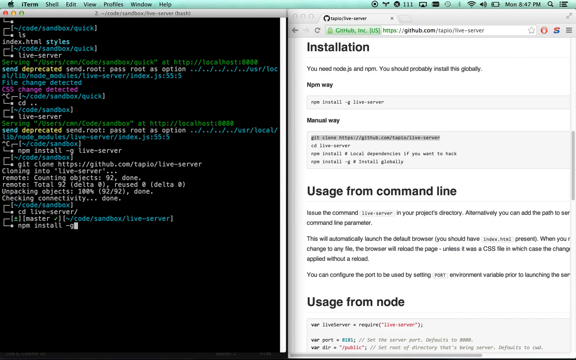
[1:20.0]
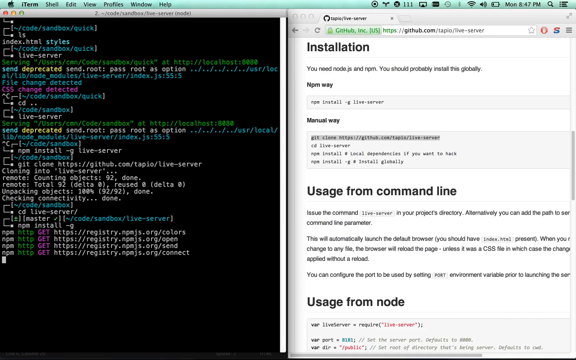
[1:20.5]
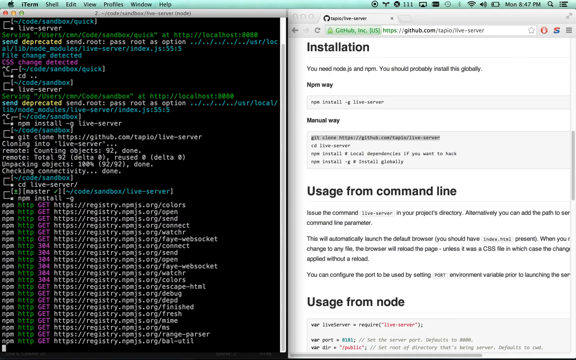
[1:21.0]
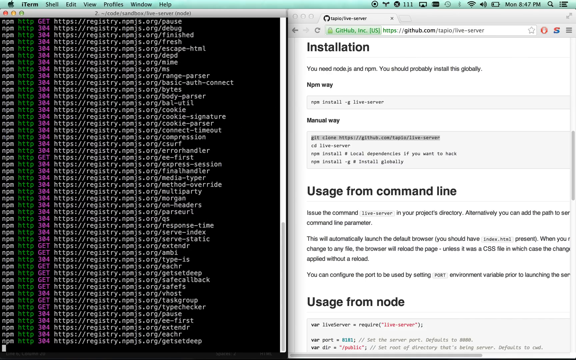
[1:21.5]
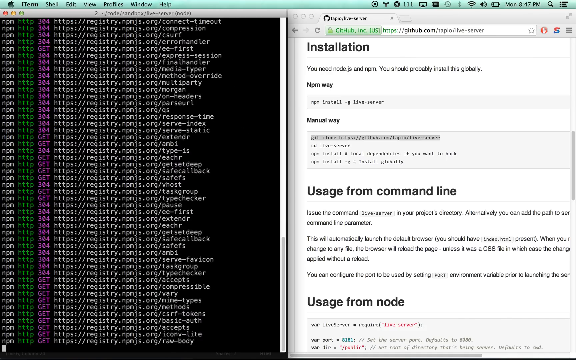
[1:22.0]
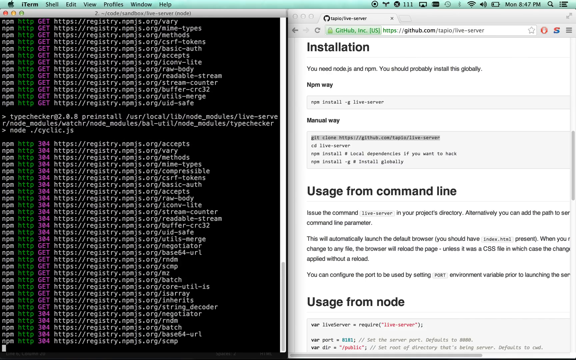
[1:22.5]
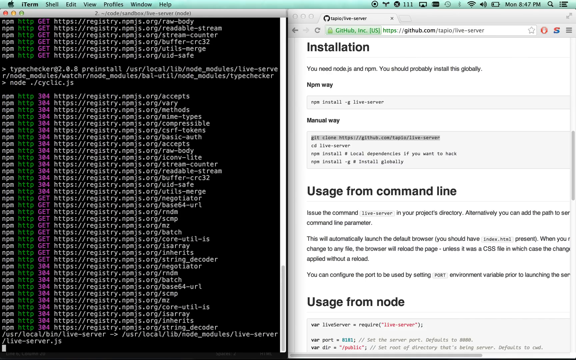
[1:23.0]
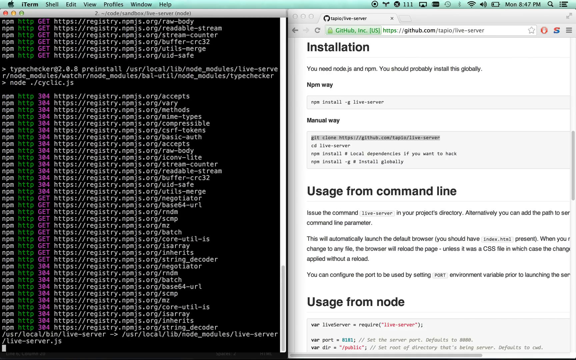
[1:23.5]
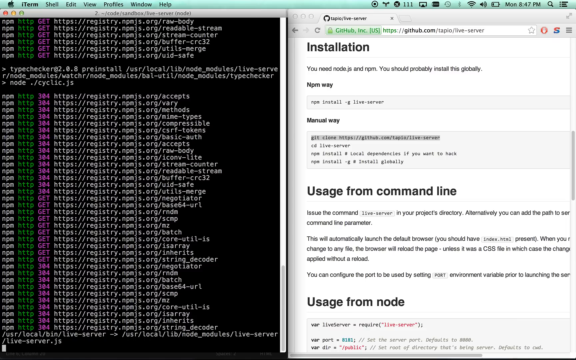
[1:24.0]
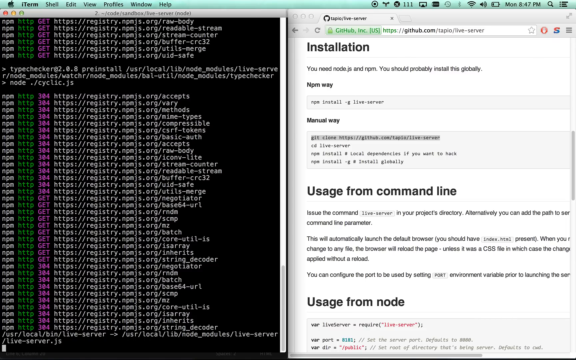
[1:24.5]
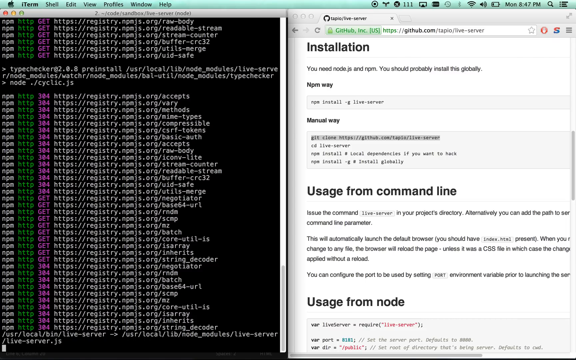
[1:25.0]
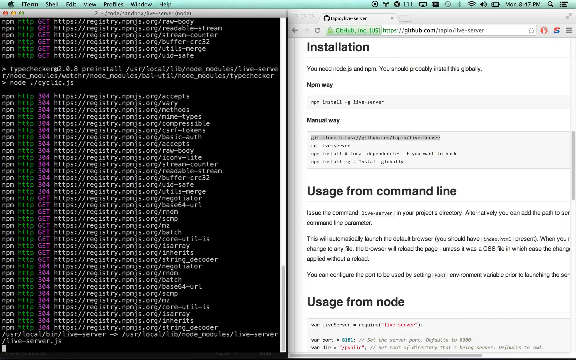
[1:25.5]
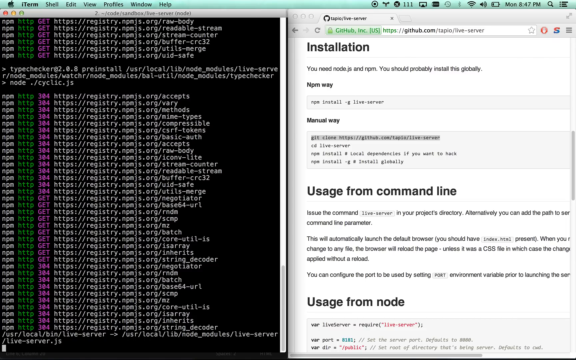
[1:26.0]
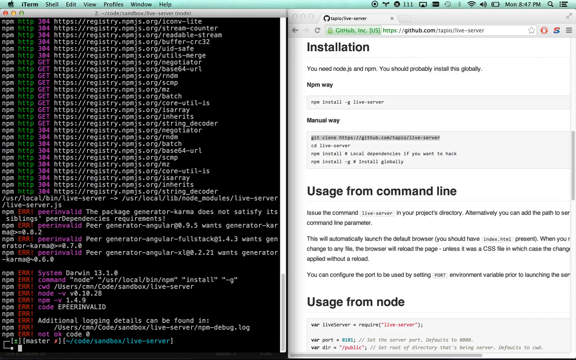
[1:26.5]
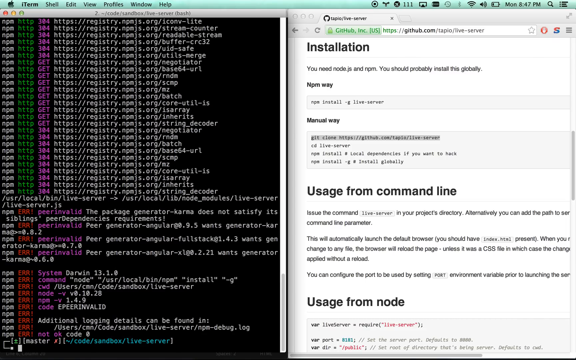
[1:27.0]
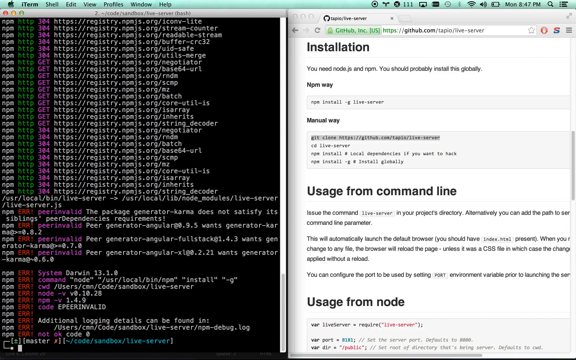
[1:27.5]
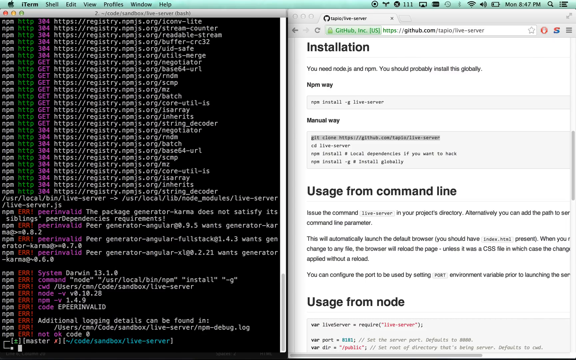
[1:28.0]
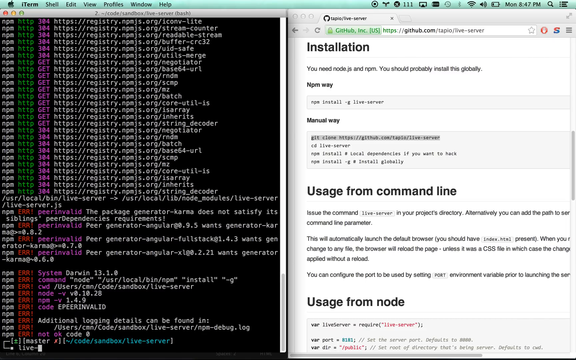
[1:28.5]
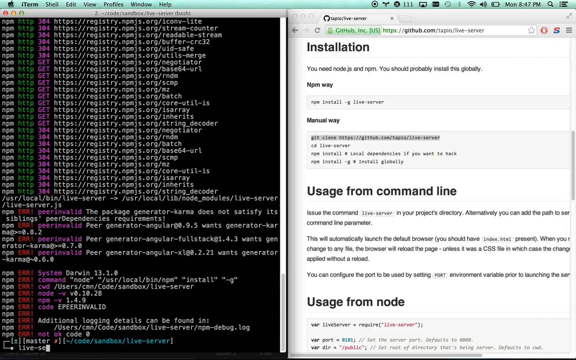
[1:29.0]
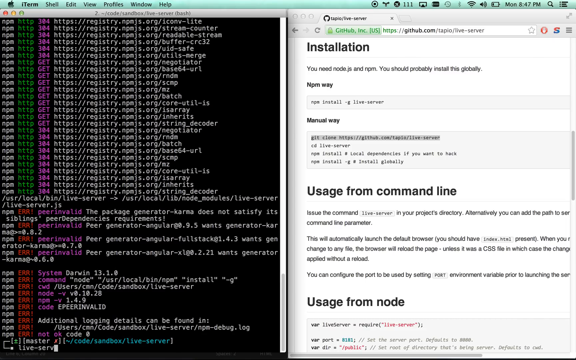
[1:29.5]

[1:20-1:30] From the box of four lines of code in the "installation" "manual way" section, the very first line is selected and copied into the terminal on the left side of the screen. The terminal gives a very long answer of many lines, something like "registry.npm" or "npm". Every line shares that same registry text, but the end of each line is different. The Google Chrome tab on the right shows no changes, unlike earlier, when manually typed commands changed the Chrome tab.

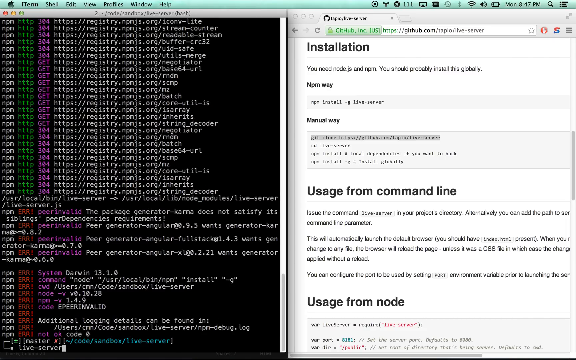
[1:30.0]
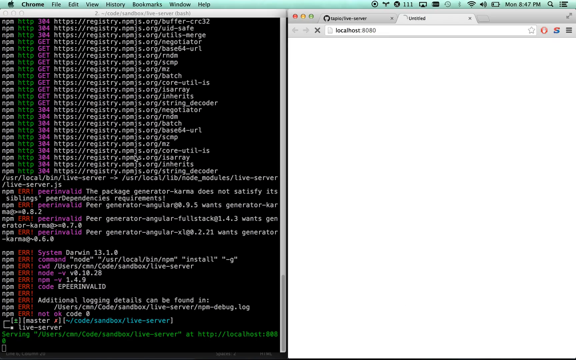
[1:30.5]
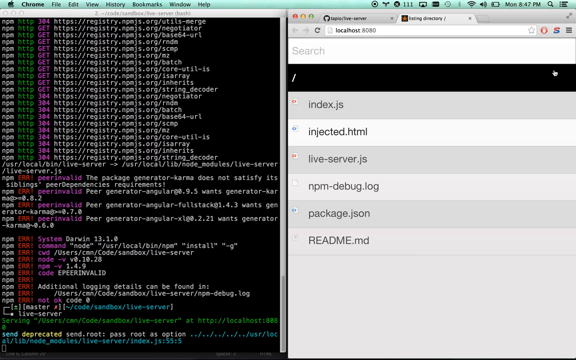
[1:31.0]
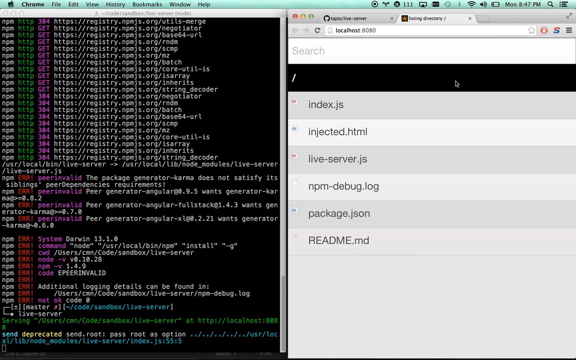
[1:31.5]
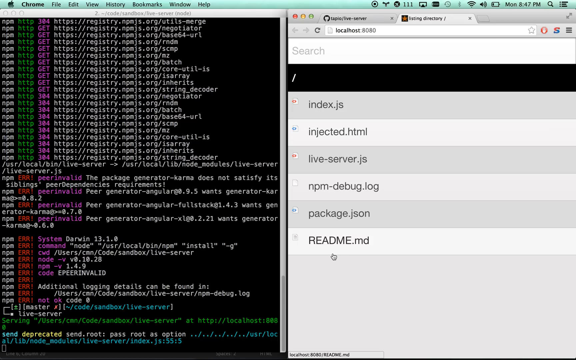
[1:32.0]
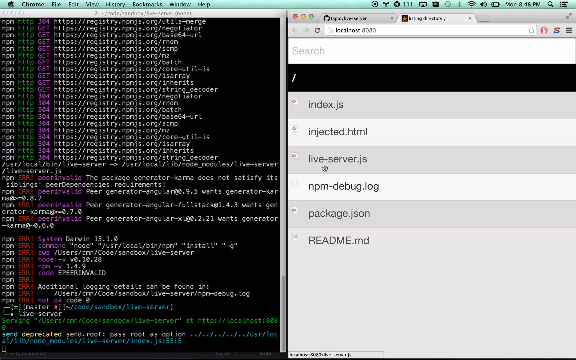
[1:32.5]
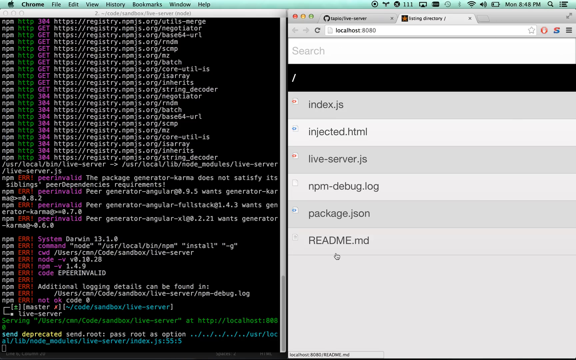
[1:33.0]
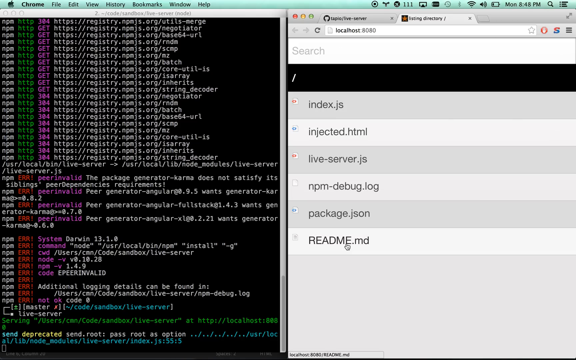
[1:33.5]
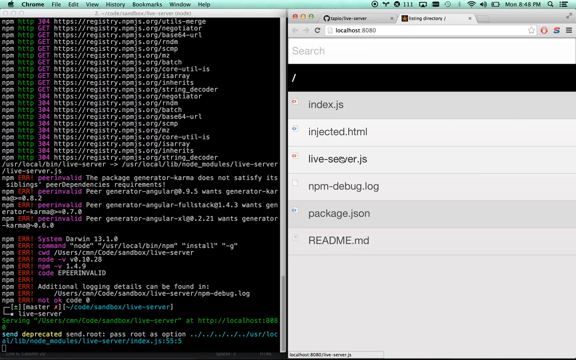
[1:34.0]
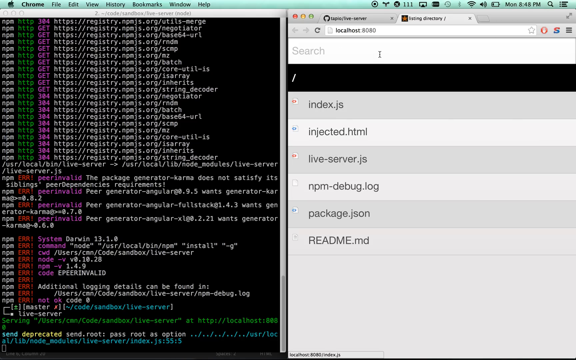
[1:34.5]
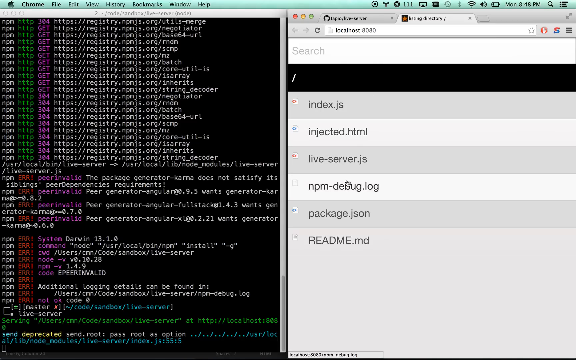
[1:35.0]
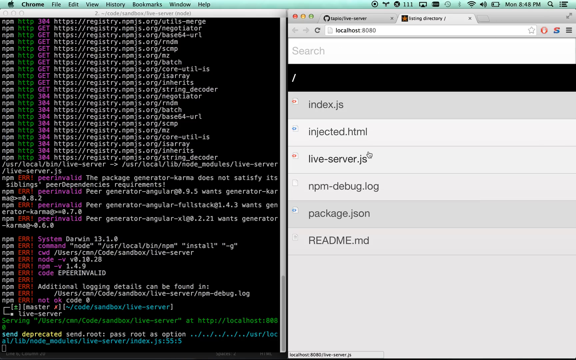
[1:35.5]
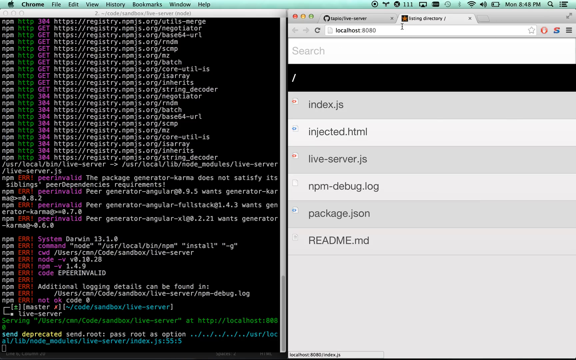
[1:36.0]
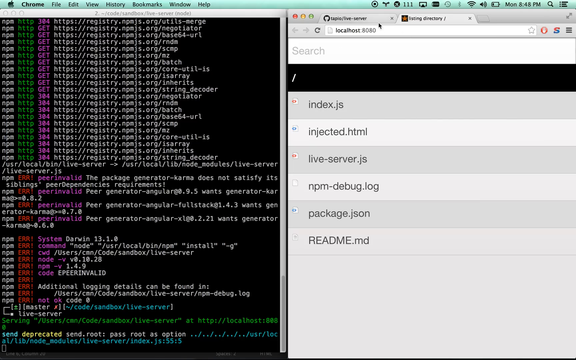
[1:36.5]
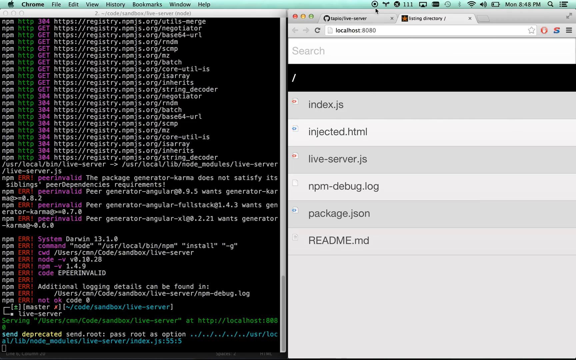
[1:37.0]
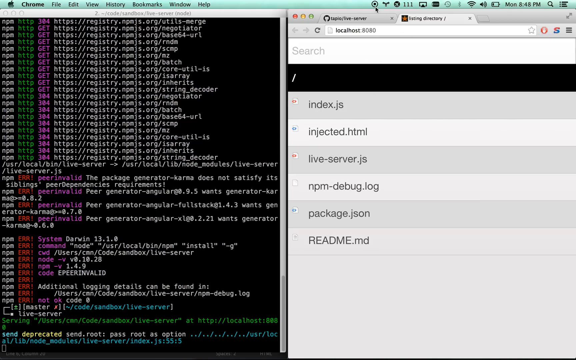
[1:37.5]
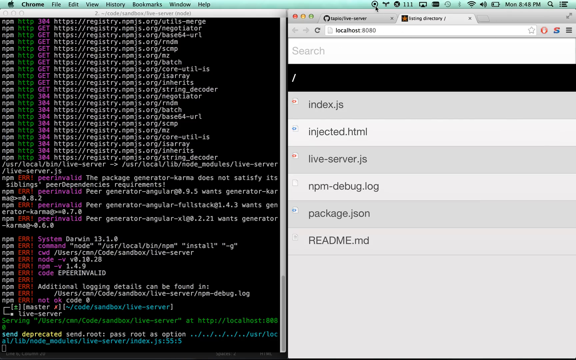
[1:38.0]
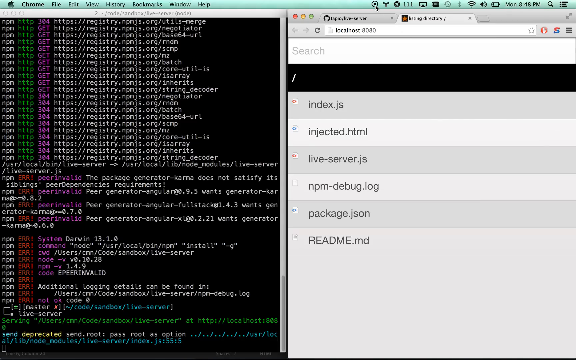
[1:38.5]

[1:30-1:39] After the very long terminal output, whose lines all share the same root and differ only at the end, a drop-down menu that was not shown before appears in the Google Chrome part of the screen on the right. It lists "index.js", "injected.html", "liveserver.js", "pmdebug.log", "package.json" and "readme.md". It also says "localhost" and indicates it is a directory.